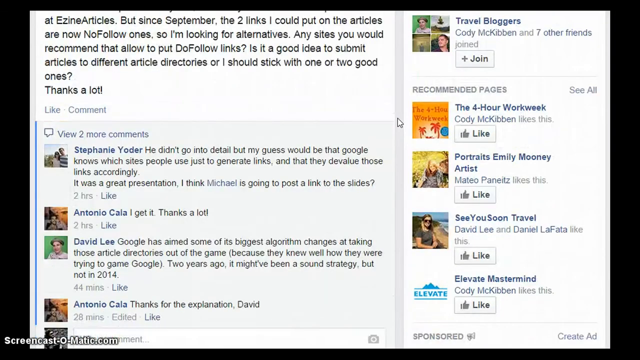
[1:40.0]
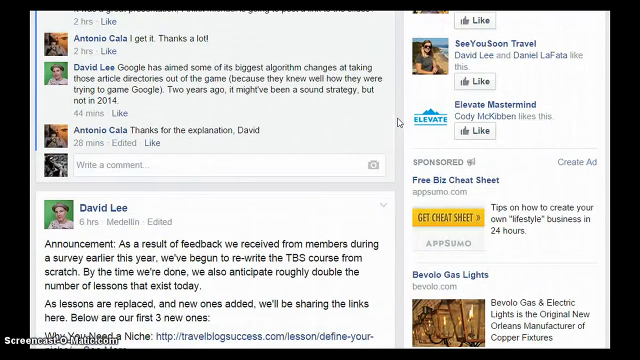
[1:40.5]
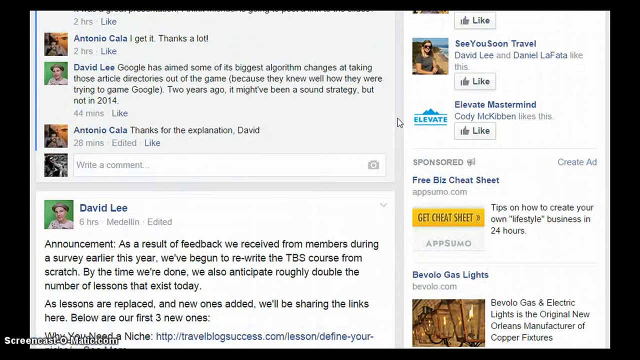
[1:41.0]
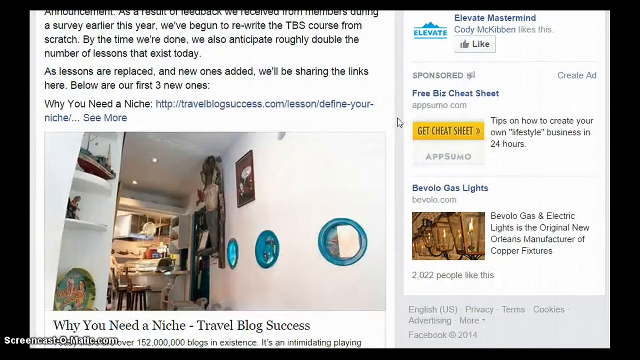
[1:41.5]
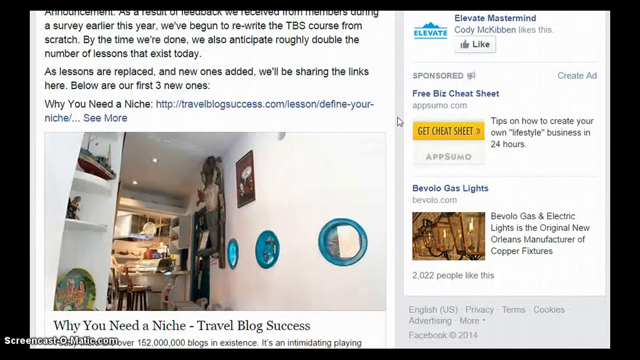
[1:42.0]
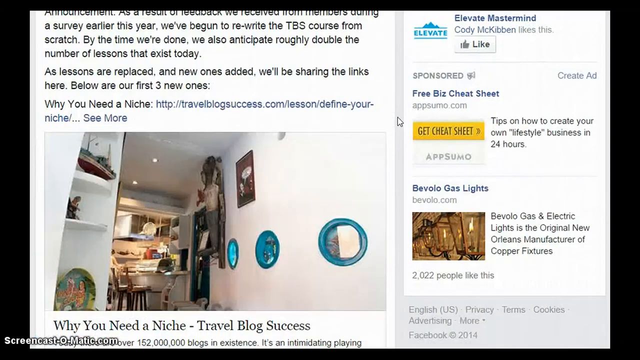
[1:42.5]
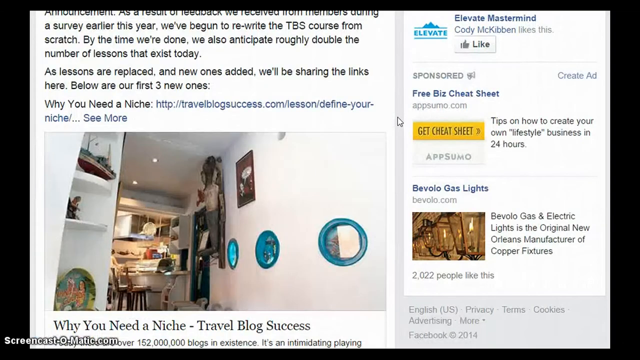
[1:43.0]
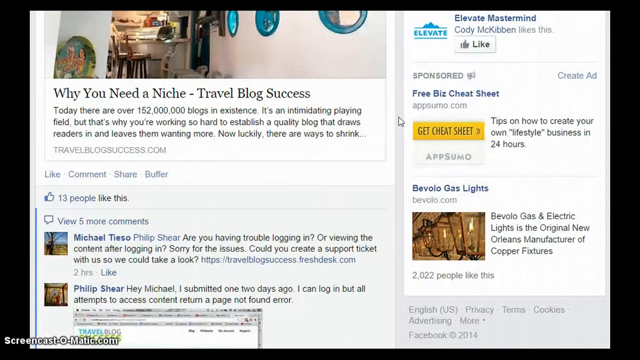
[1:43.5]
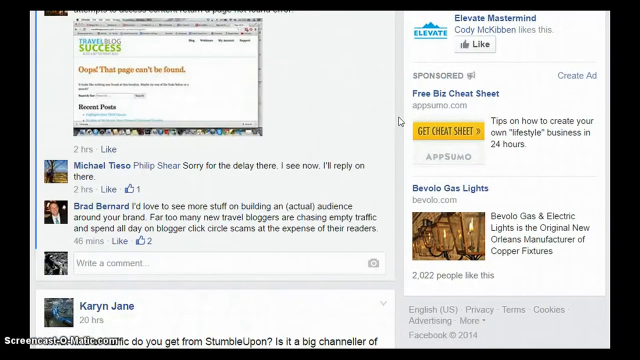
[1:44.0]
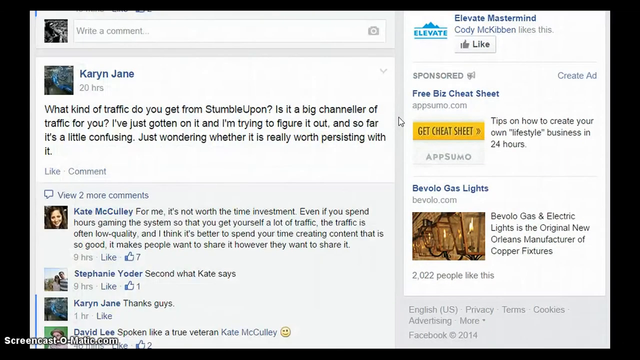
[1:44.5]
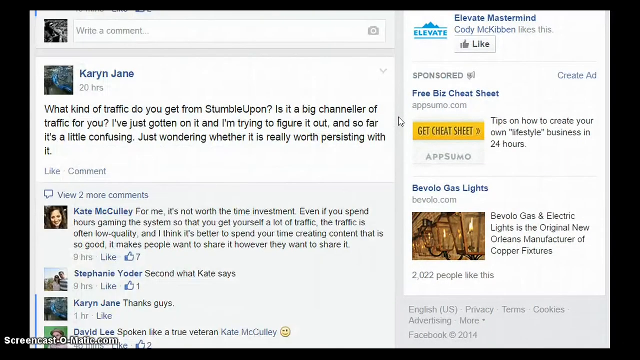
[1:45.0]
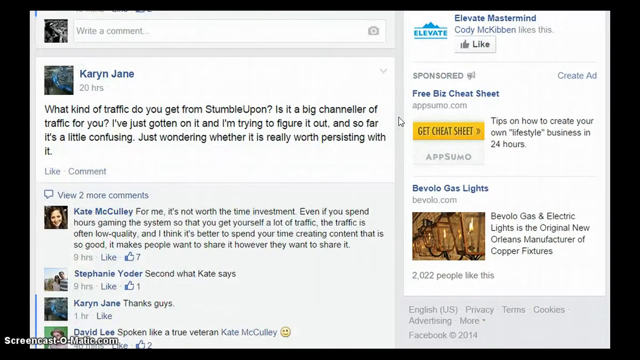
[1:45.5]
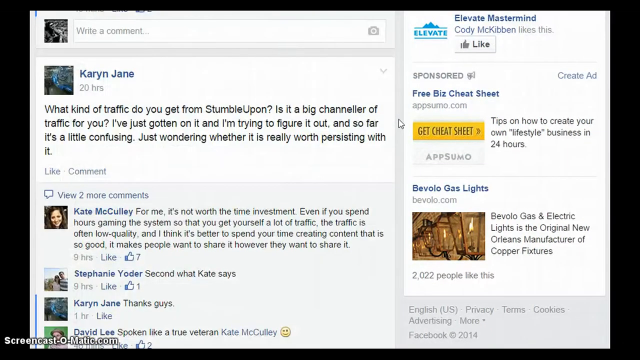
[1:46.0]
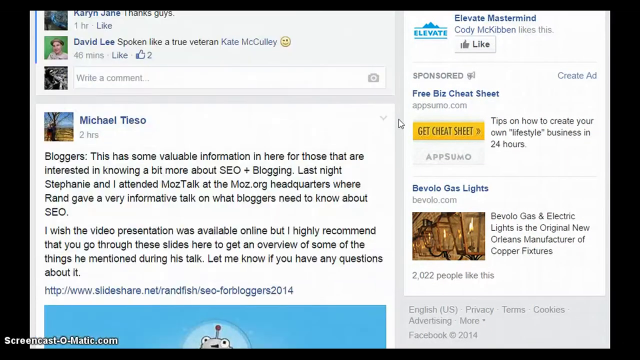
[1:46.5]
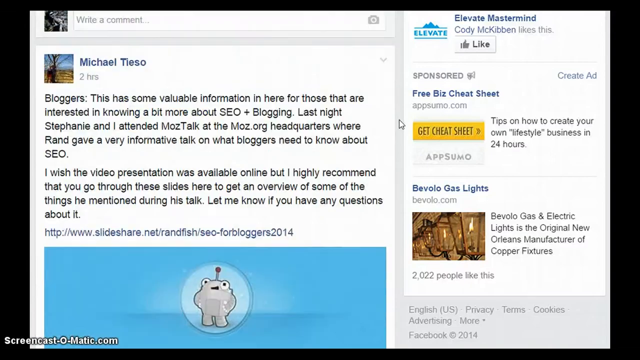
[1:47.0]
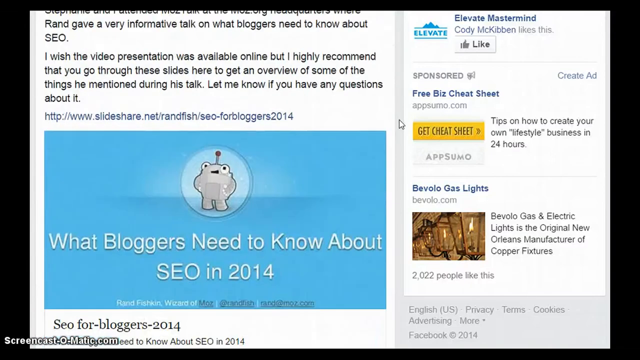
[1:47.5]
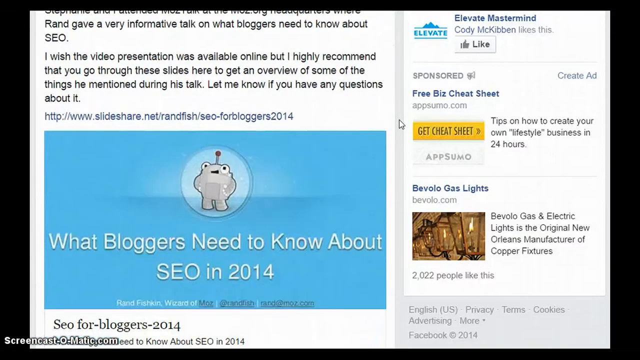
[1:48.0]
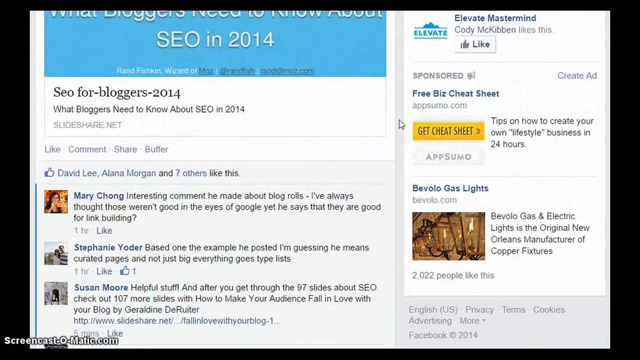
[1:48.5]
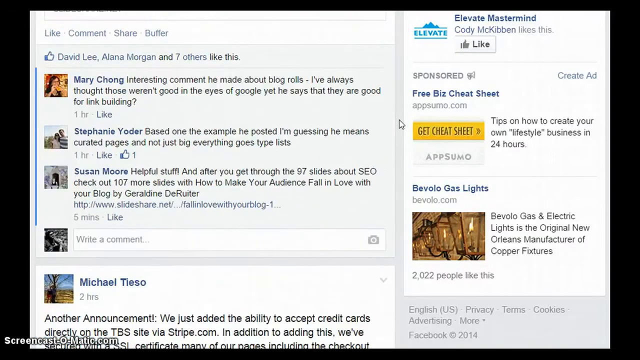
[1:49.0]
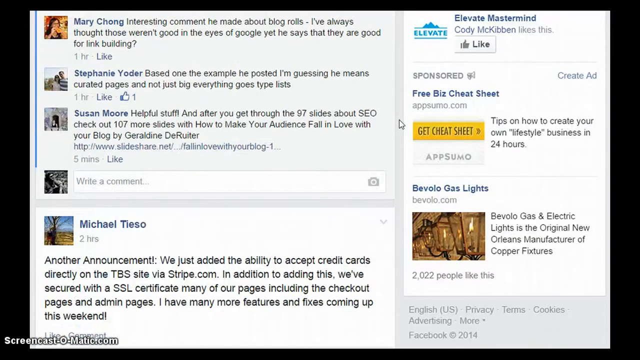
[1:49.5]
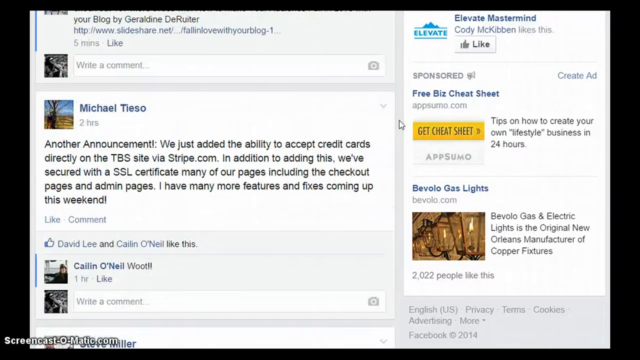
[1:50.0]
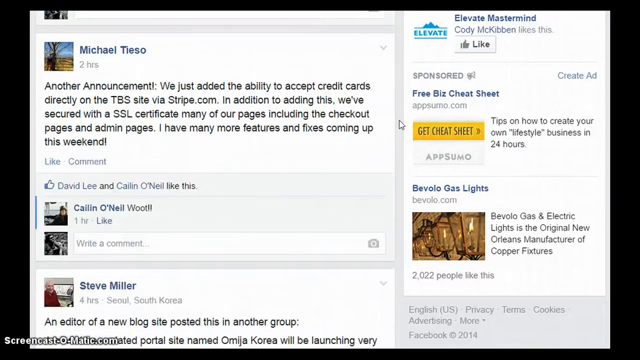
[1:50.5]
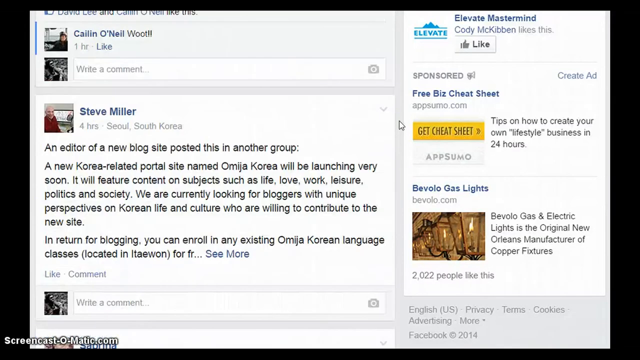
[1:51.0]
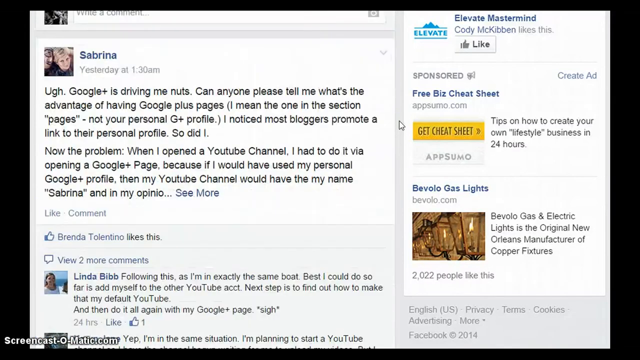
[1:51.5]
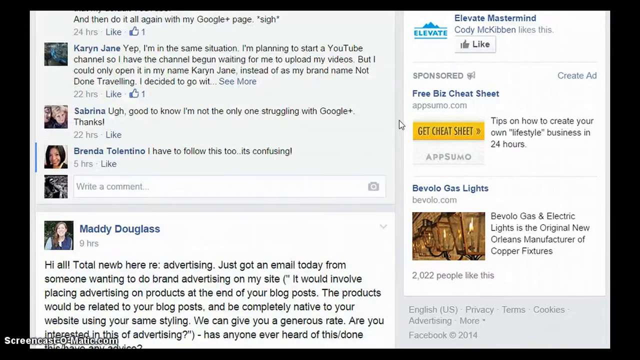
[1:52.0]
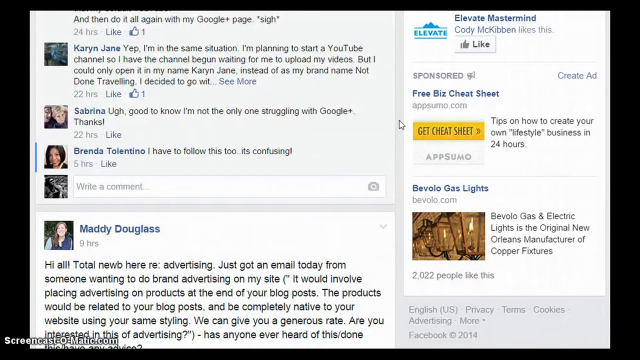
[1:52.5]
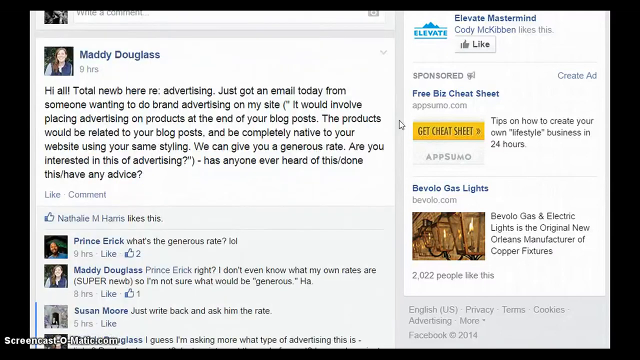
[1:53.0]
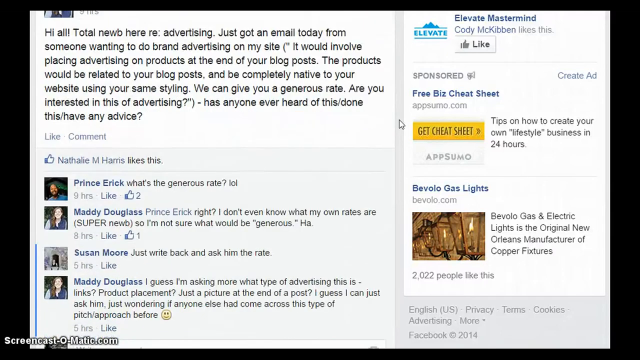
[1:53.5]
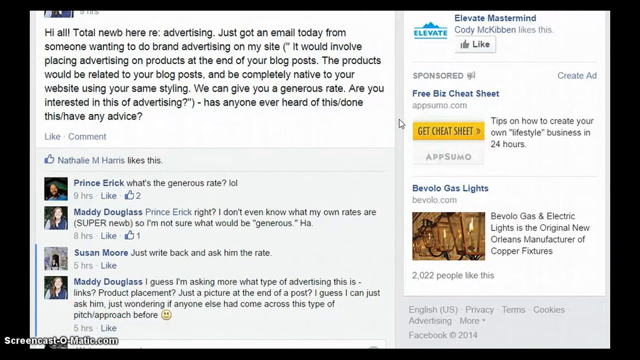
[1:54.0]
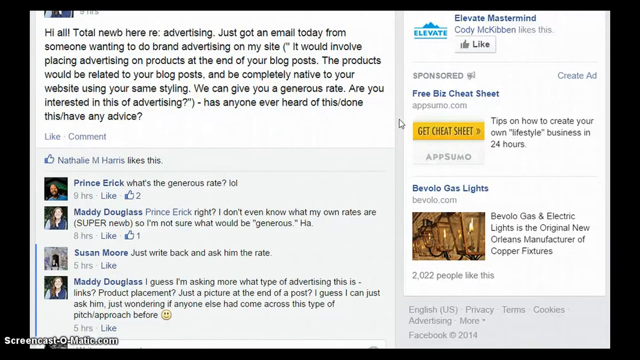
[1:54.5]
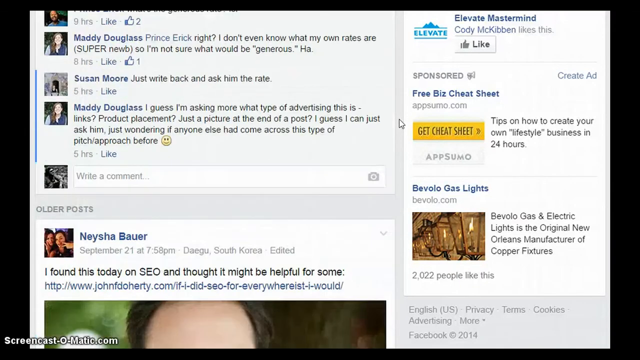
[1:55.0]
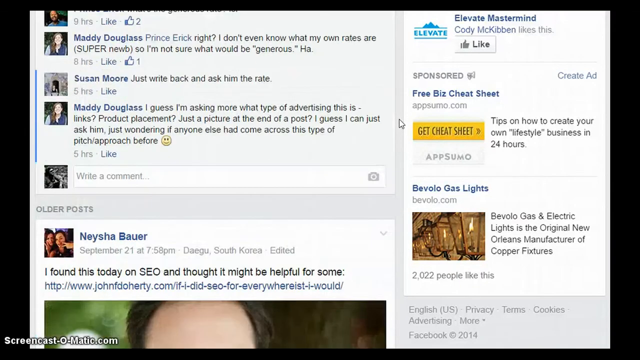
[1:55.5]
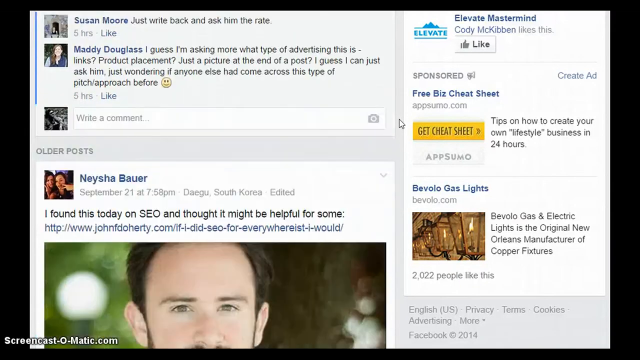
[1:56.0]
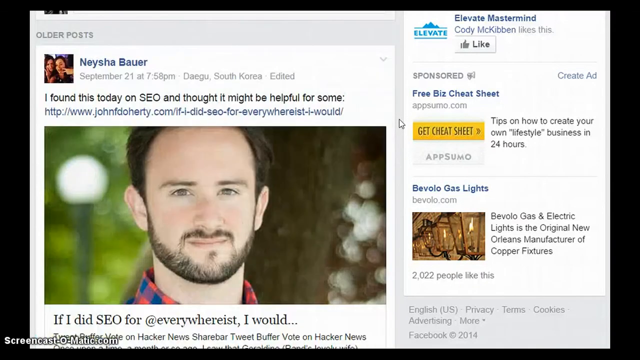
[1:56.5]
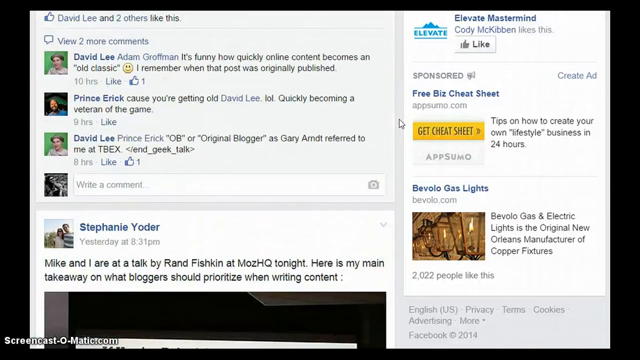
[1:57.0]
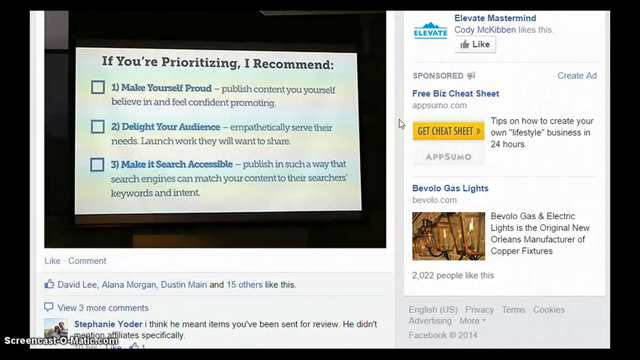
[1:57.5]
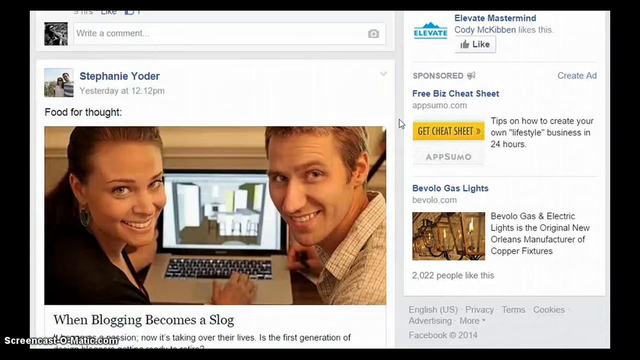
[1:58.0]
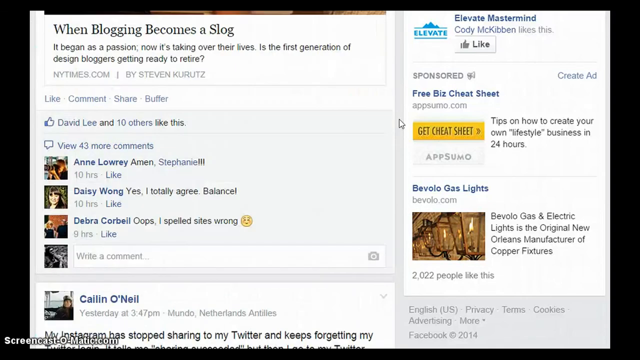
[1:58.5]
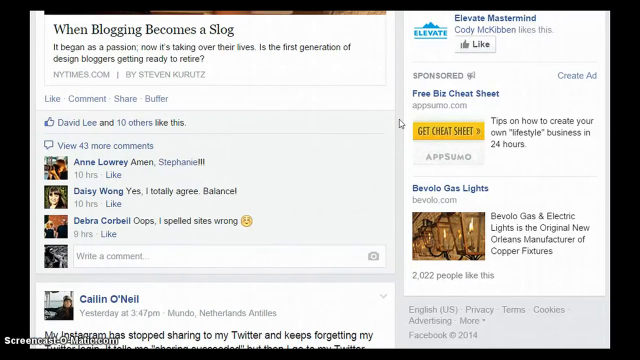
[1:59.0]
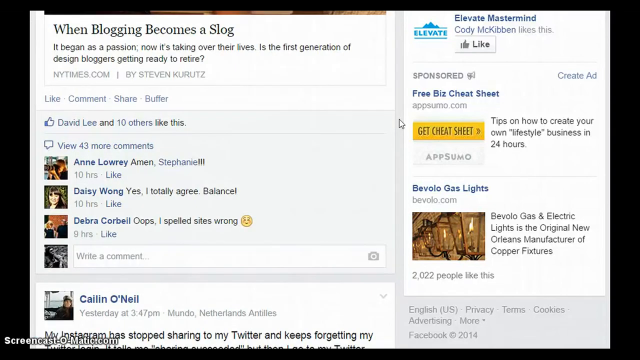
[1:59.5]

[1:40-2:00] A page titled "what our members say" shows about six, maybe more, members, each with their face in a circle and a testimonial about the product. The text is small and somewhat hard to read. One reads: "Travel blog success has been a great resource for connecting with like-minded business savvy individuals," says Adam. Matthew says, "I've learned how to pitch companies, improve SEO, find advertisers, and attract thousands of new readers using these tutorials, guest webinars, and the amazing private Facebook group." Kaz says, "Before starting travel blog success, I had no idea how to make money with a travel blog. I was actually pretty scared of it. Now I am confident enough to not just approach advertisers, but to negotiate with them deals that work in my favor." The video then goes through the map of the website again.